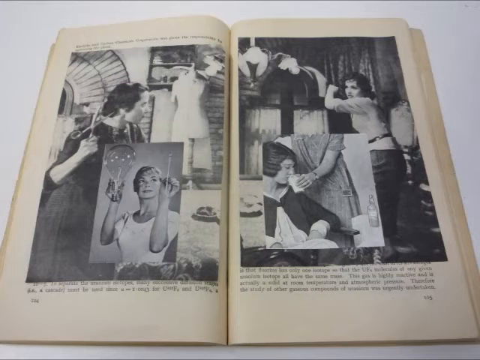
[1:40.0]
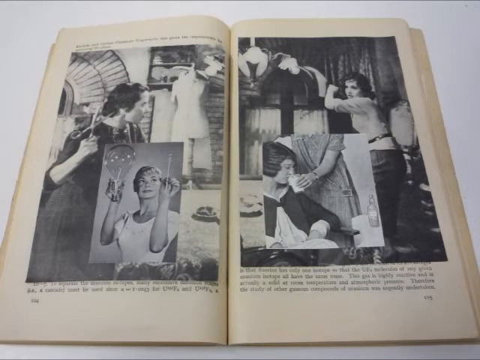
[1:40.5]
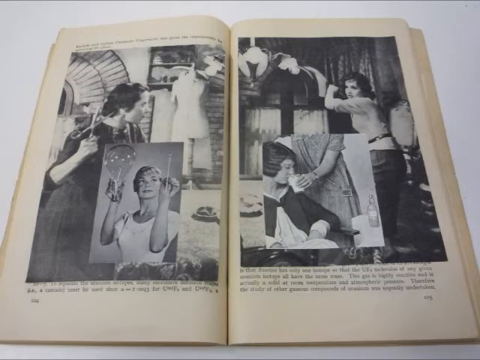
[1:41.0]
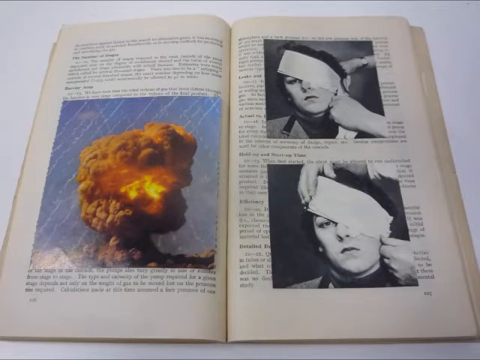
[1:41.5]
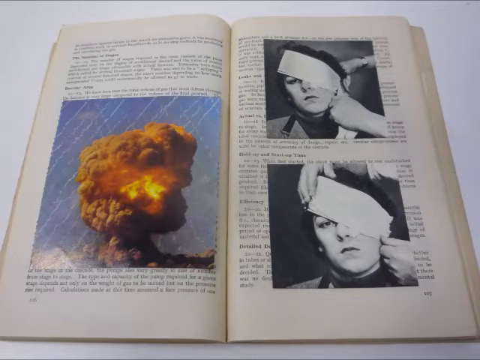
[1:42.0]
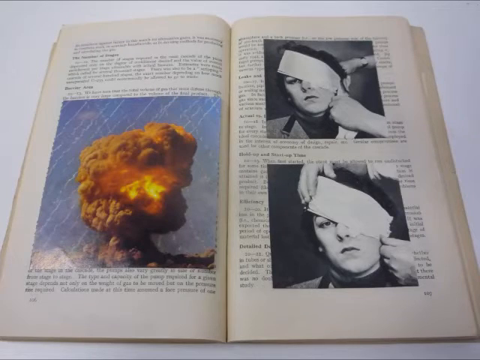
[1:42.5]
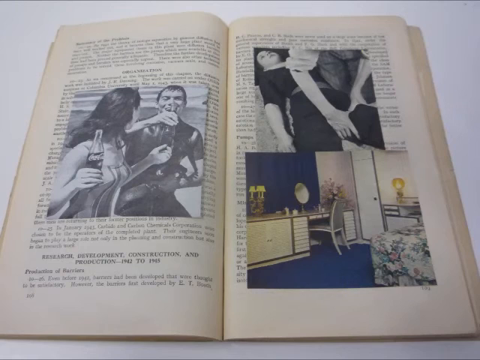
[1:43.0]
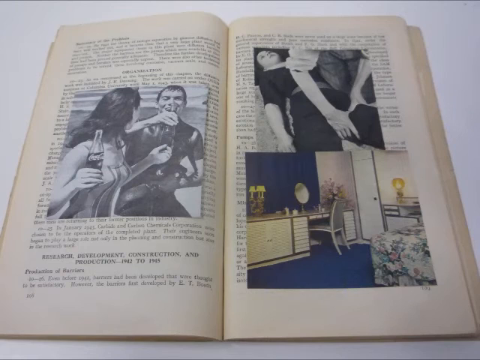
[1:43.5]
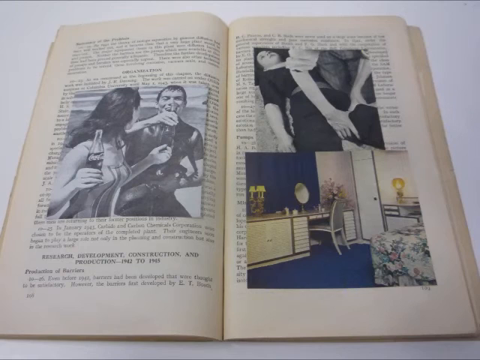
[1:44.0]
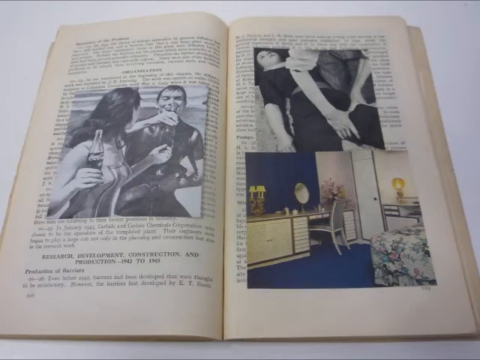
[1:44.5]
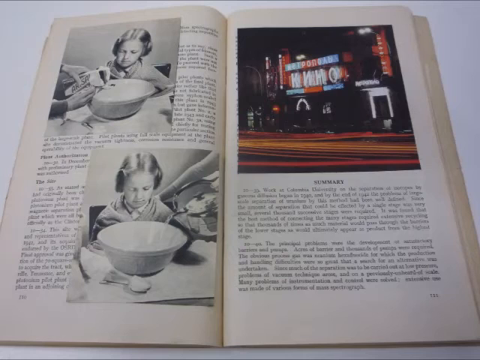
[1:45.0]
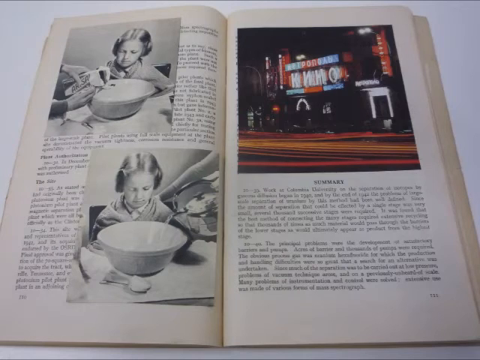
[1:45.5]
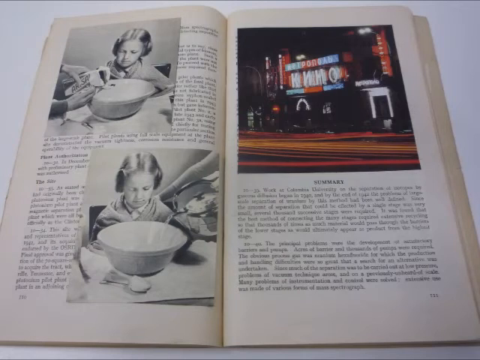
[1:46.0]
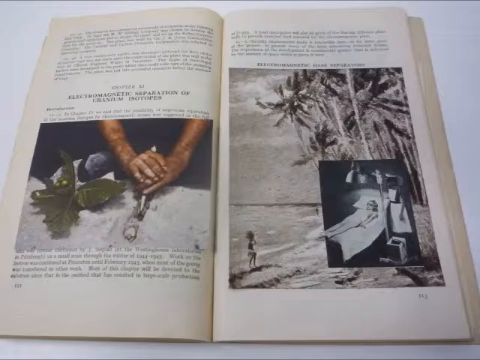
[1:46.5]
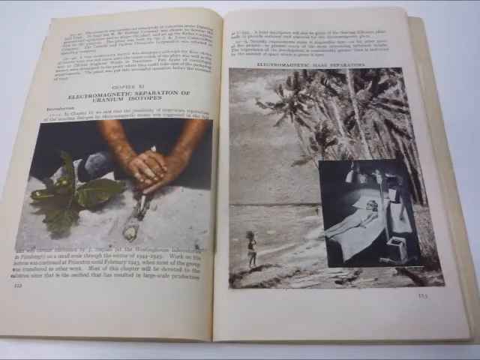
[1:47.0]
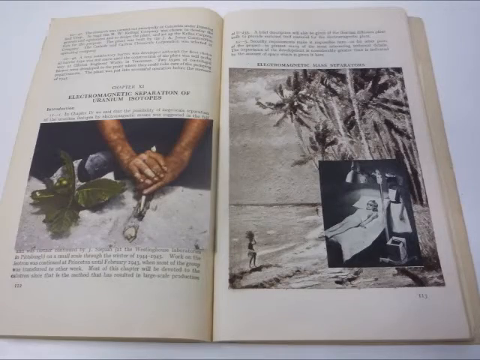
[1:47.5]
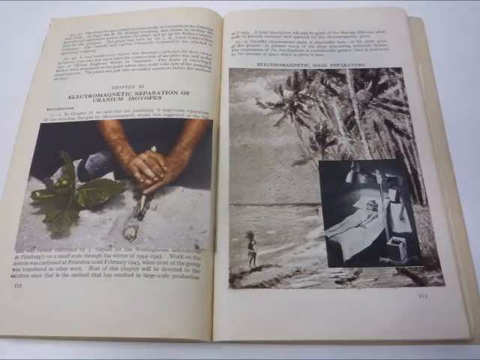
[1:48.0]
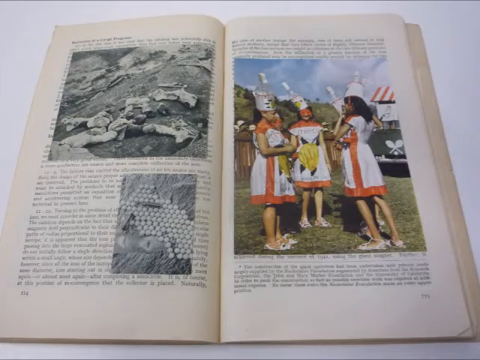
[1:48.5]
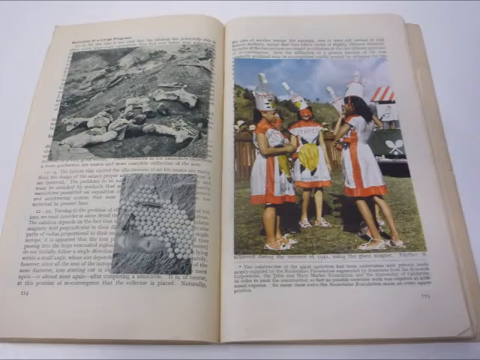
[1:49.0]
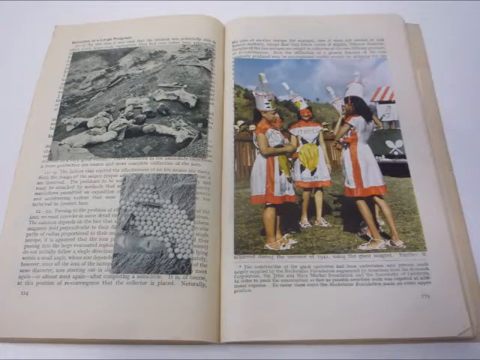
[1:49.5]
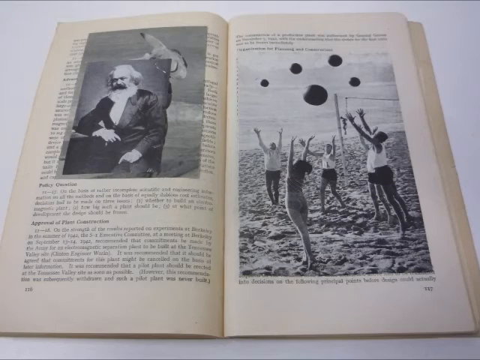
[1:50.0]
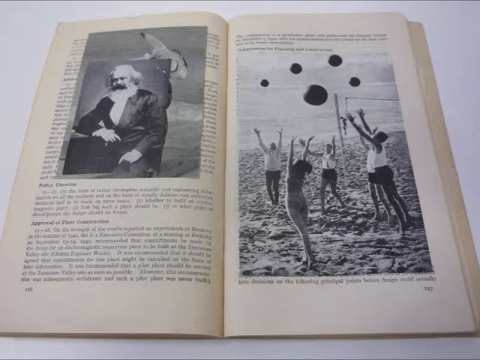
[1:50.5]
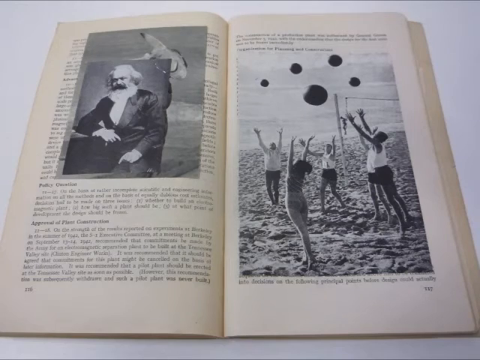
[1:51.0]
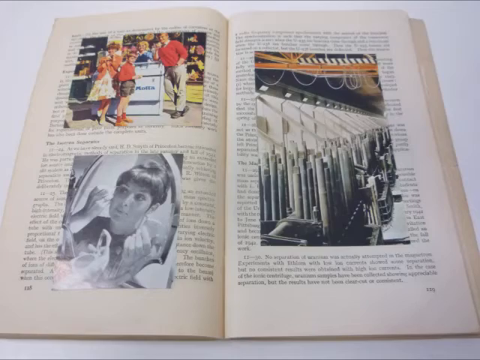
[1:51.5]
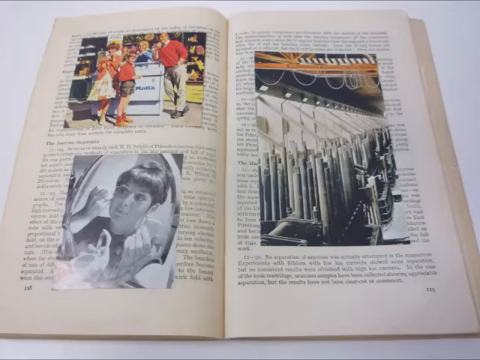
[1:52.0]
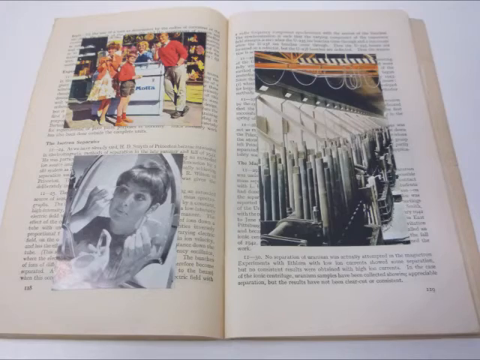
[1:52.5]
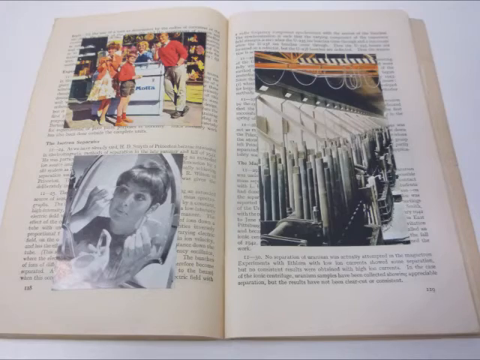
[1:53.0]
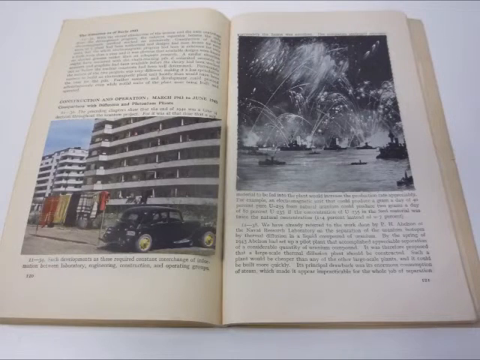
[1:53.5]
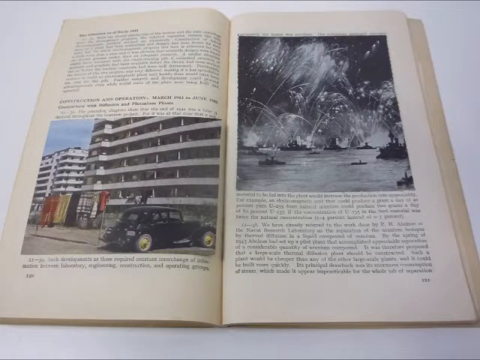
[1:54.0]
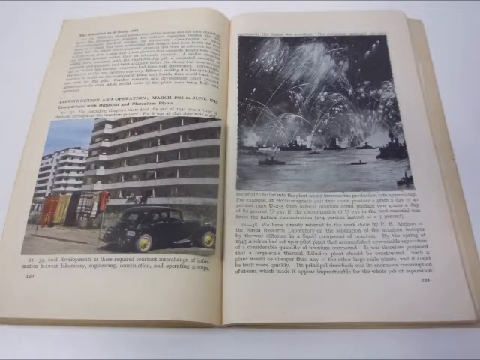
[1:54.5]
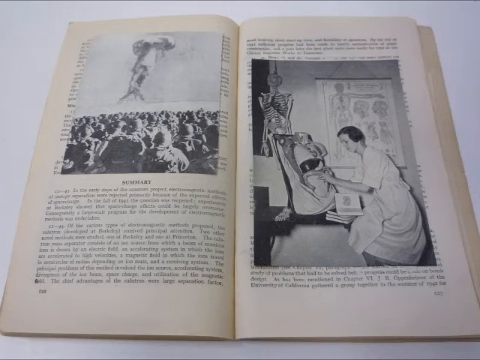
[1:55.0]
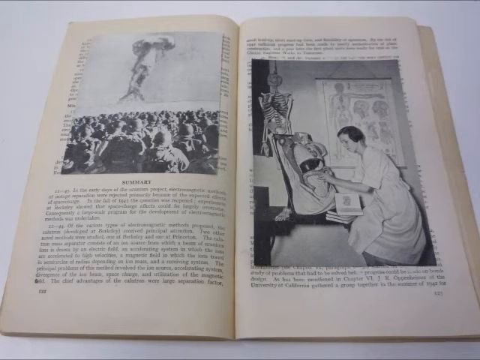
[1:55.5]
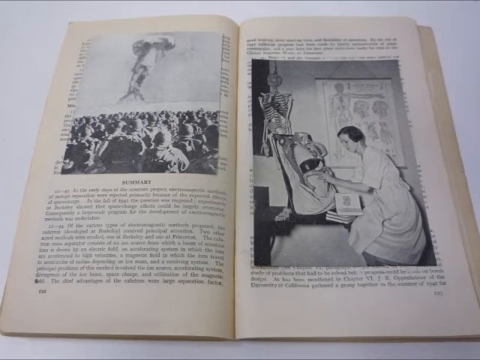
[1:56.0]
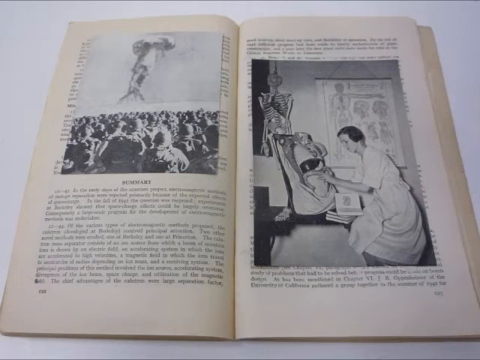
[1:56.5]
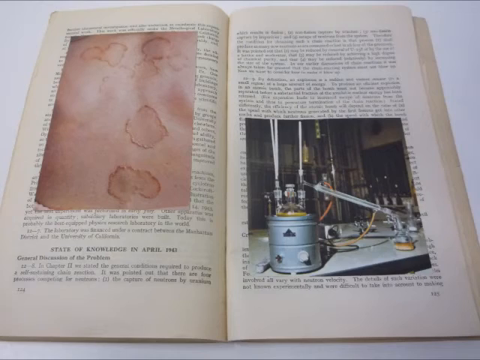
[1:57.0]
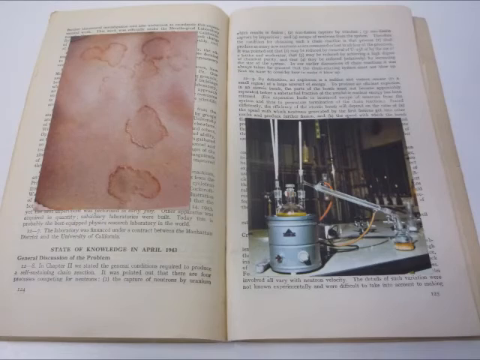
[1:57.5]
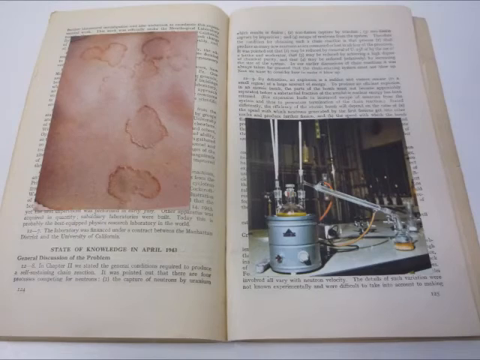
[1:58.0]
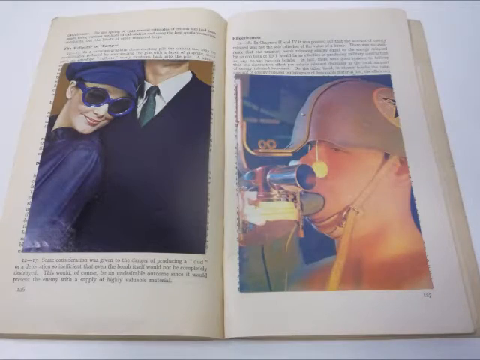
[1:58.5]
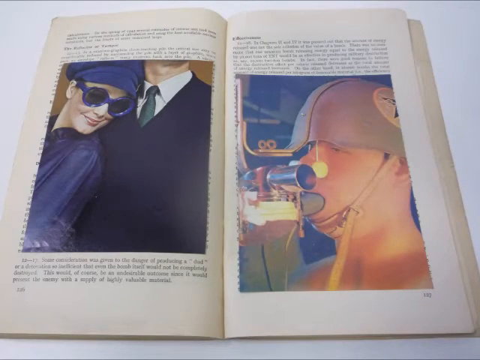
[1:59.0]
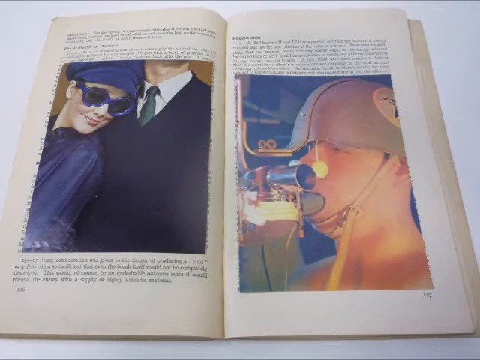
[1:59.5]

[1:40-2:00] The inside of the 1945 atomic energy leaflet has black text; one of the first pages shown reads "research, development, construction and production 1942 to 1945". Loose photographs inserted into the leaflet show a variety of things and seem to span a longer period, not all appearing to date from when the leaflet was produced. They include a black and white photo of a man and a woman on a beach drinking glass bottles of Coca-Cola, somebody doing some sort of first aid to a woman's leg, the inside of a room with a blue carpet and a blue curtain, a young child learning to bake, volleyball at the beach, close-ups of particular brushes, a picture of an explosion, and some sort of bandage being tied to someone's eye. They are a random mix of colour and black and white, some slightly more scientific than others.